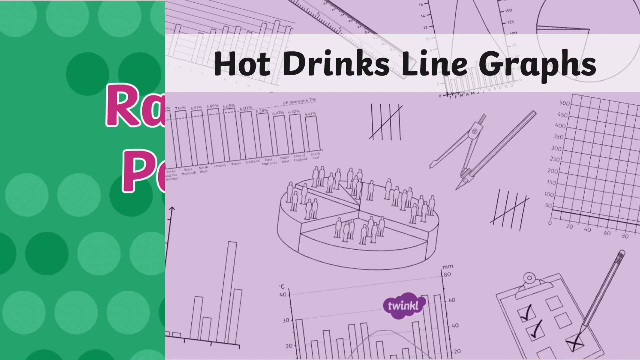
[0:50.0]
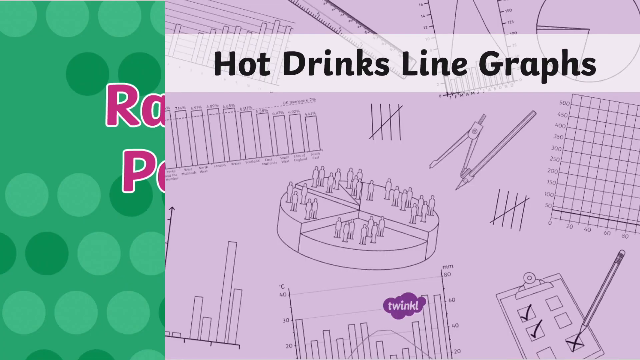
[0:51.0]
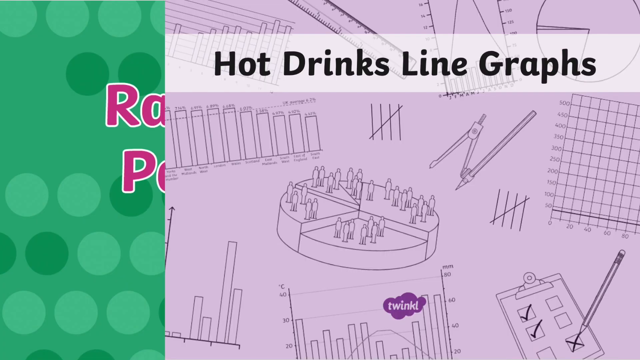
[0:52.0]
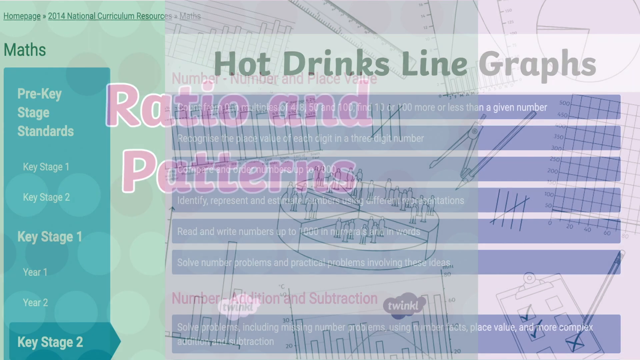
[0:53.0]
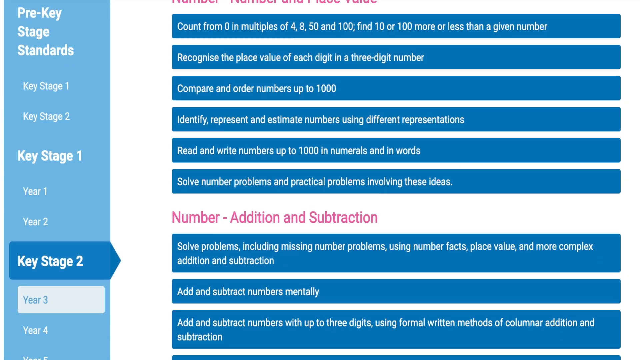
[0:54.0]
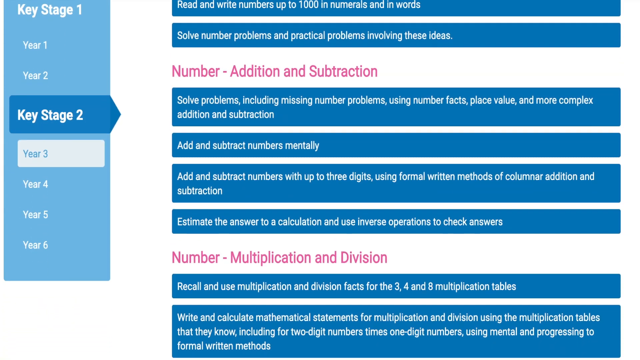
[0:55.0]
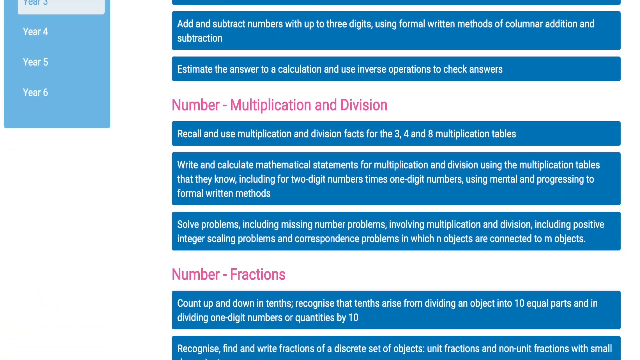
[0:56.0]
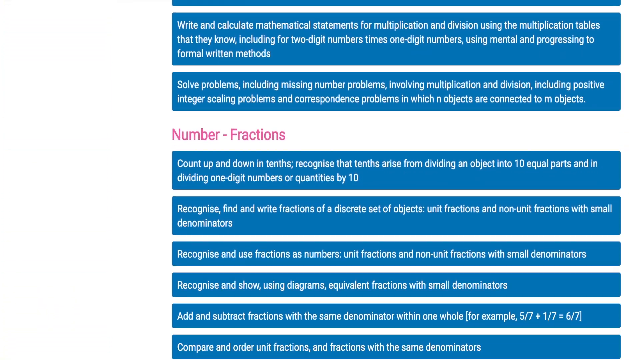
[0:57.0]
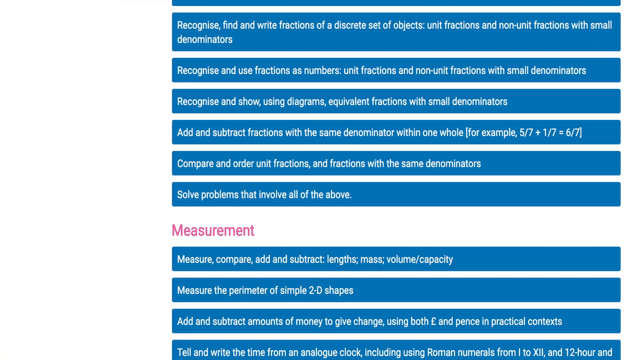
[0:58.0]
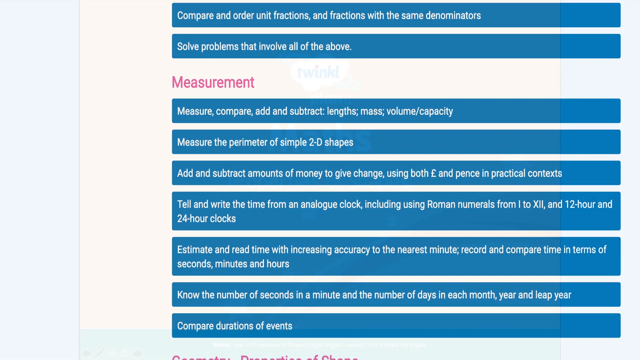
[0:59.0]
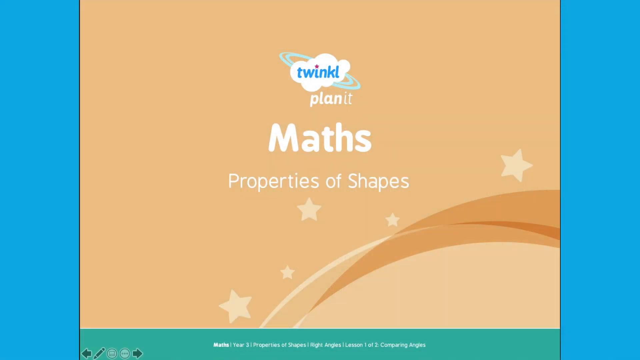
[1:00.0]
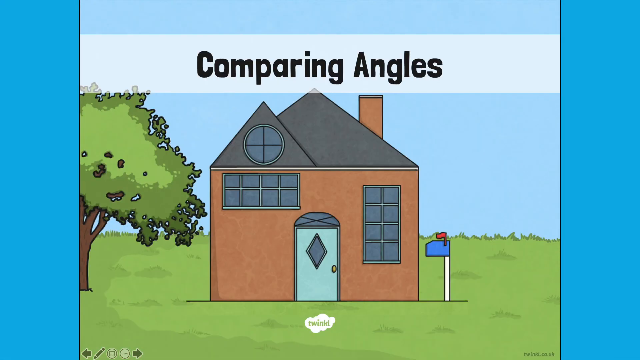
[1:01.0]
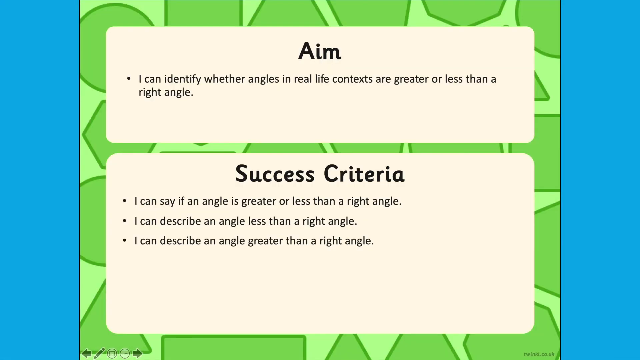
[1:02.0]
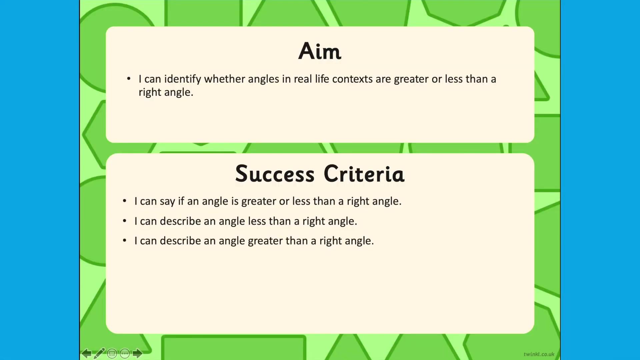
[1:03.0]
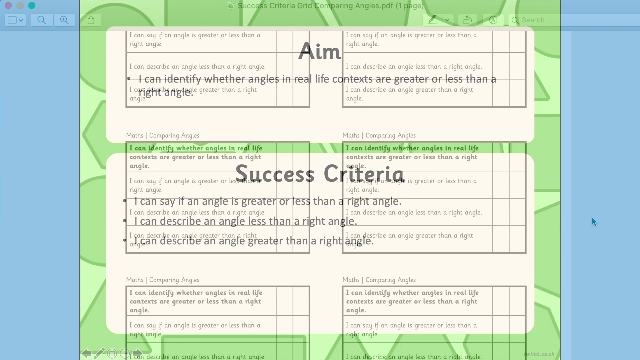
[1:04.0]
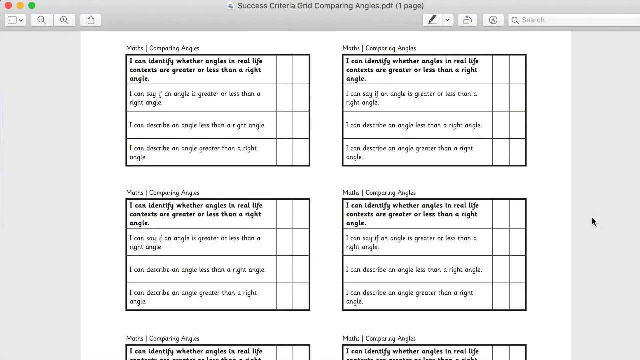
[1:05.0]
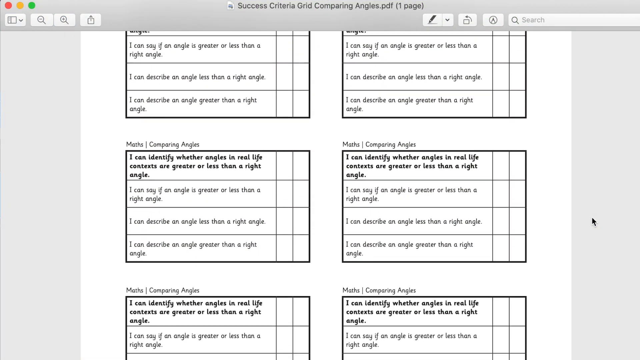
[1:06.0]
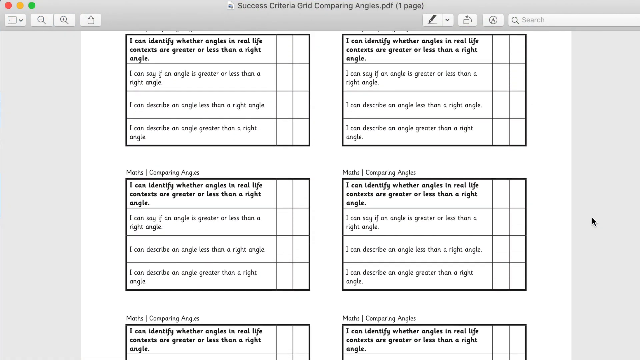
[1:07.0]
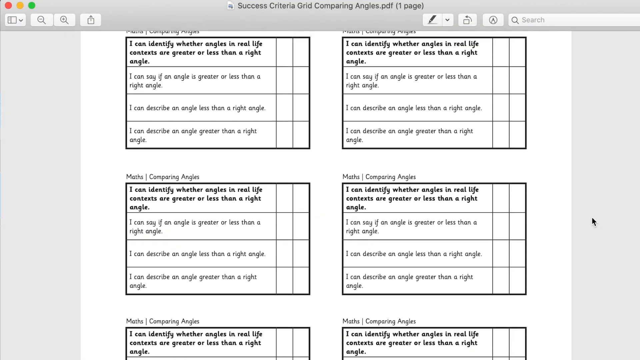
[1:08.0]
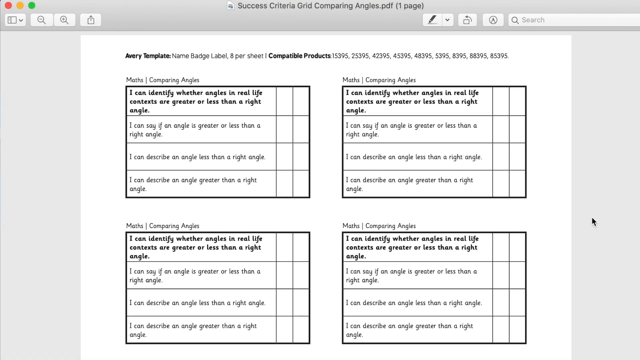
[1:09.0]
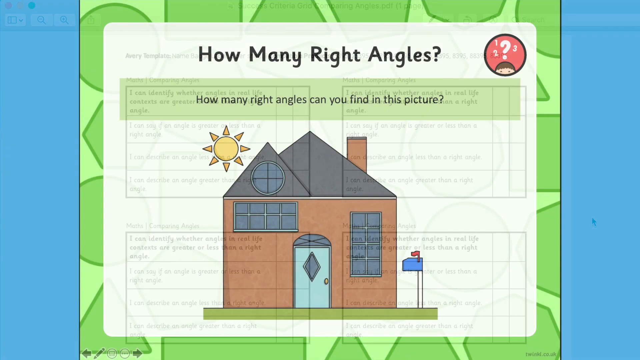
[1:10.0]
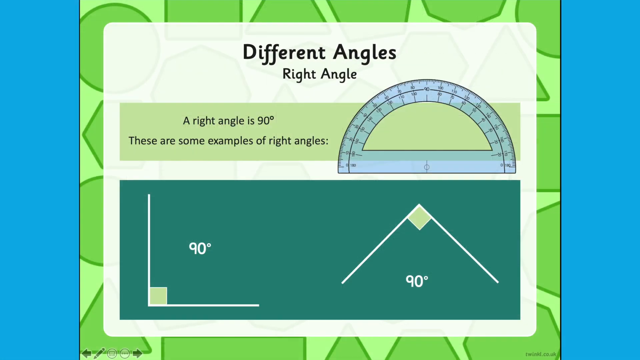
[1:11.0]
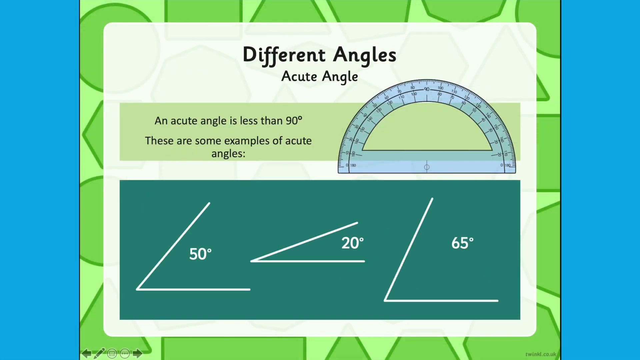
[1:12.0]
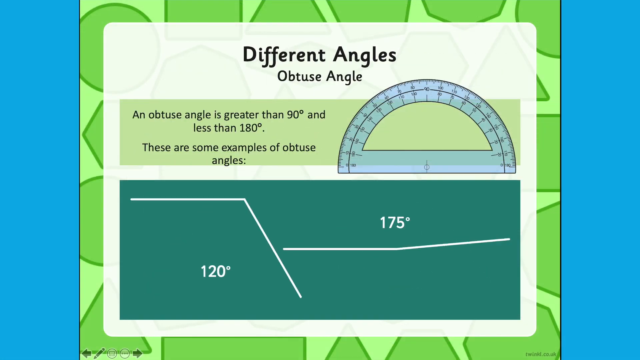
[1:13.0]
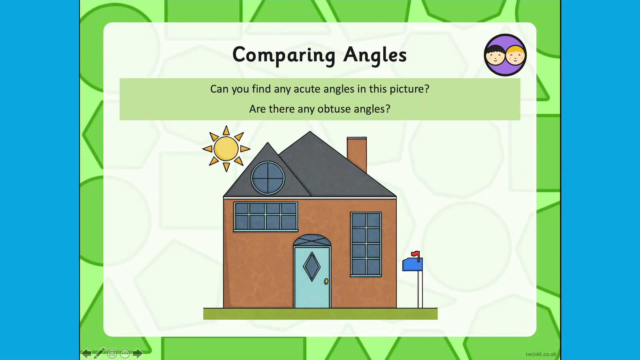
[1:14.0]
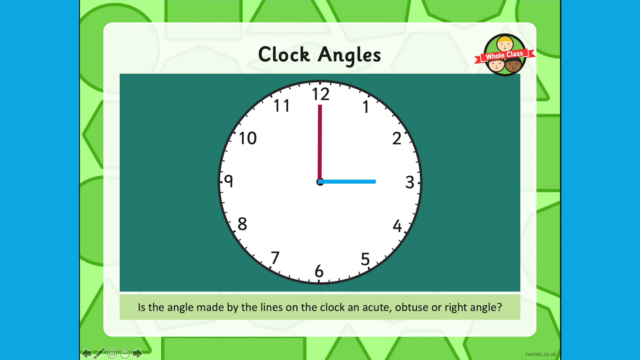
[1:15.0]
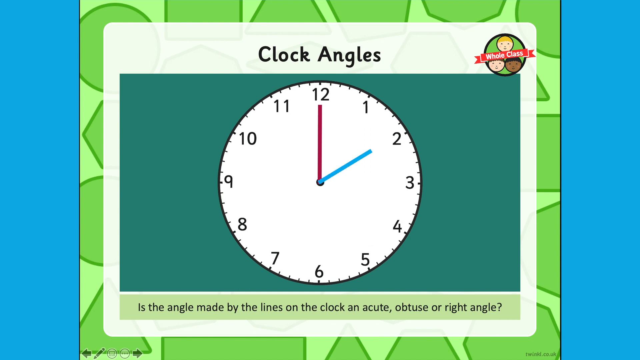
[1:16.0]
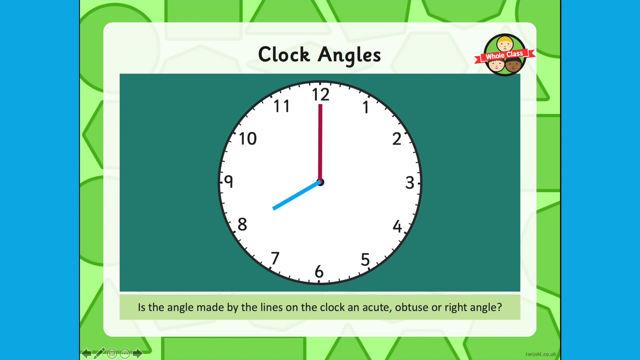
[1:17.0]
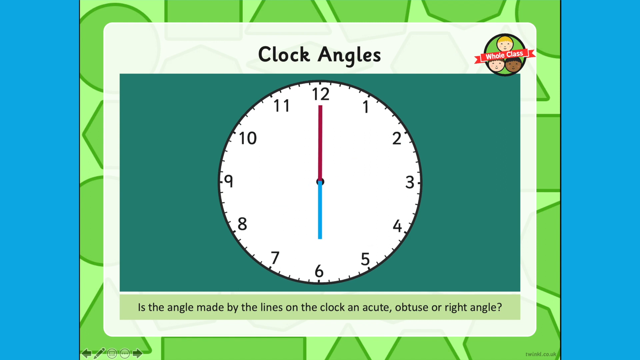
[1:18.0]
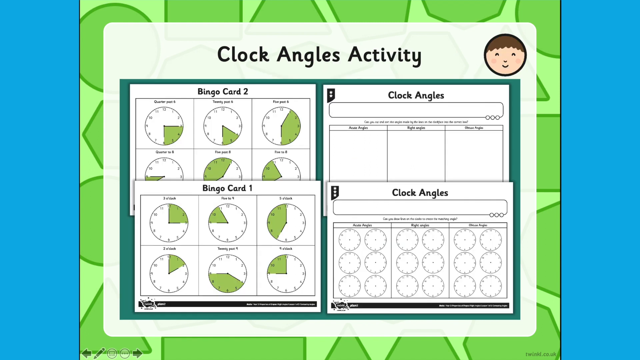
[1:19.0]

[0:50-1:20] Different key stages are listed: year one, year two, key stage two, year three, year four, year five and year six, with objectives for each stage. These include identifying, representing and estimating numbers using different representations; reading and writing numbers up to a thousand in numerals and in words; solving number problems and practical problems involving these ideas; and number addition and subtraction. Another stage focuses on solving problems, including missing number problems, using number facts, place value, and more complex addition and subtraction; adding and subtracting numbers mentally; adding and subtracting numbers with three digits using column addition and subtraction; and using inverse operations to check calculations.